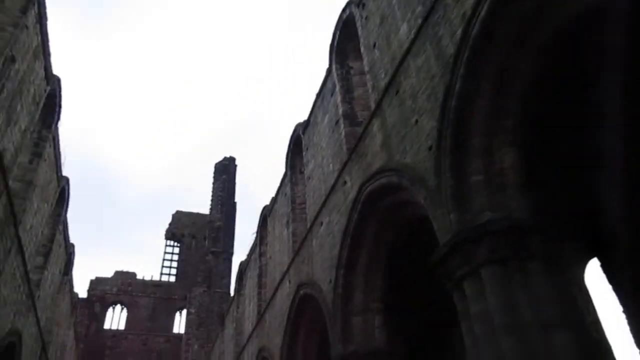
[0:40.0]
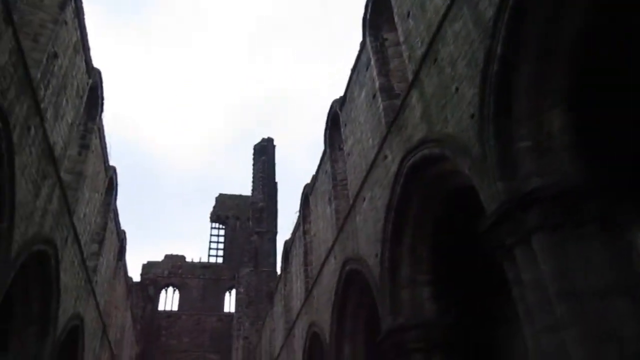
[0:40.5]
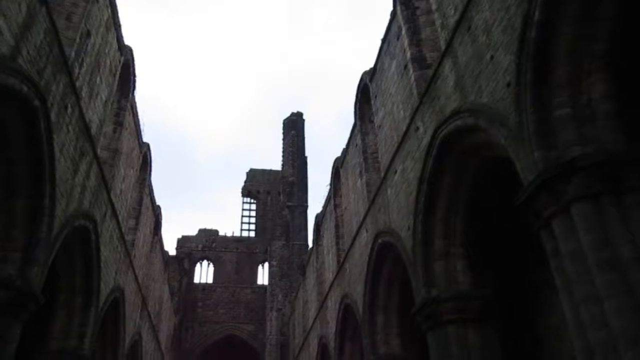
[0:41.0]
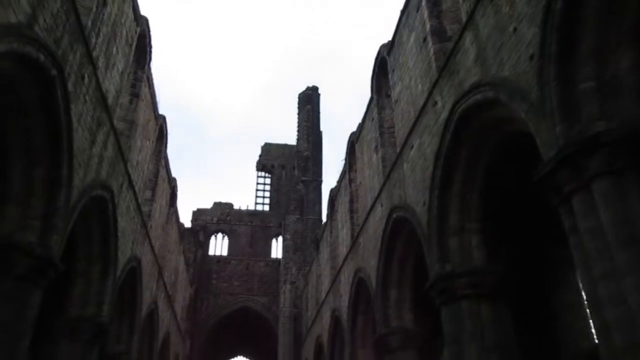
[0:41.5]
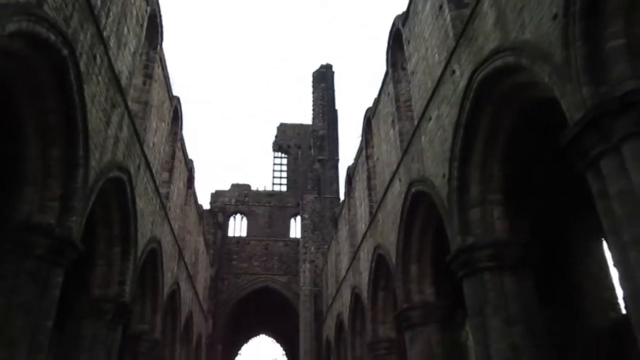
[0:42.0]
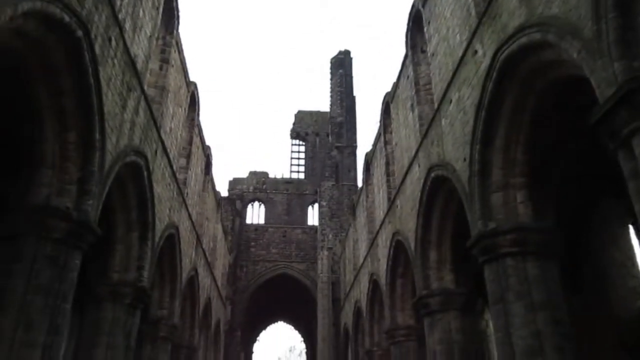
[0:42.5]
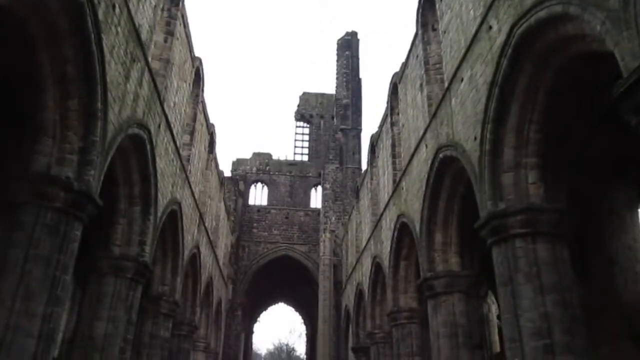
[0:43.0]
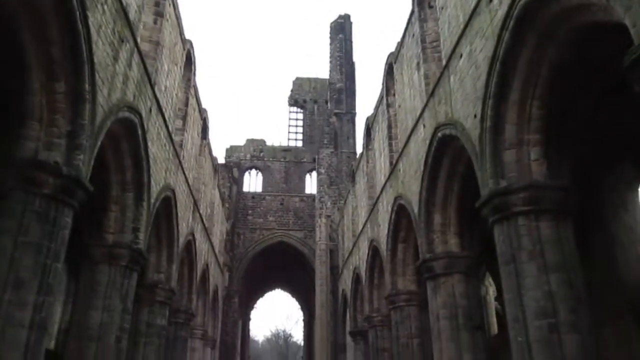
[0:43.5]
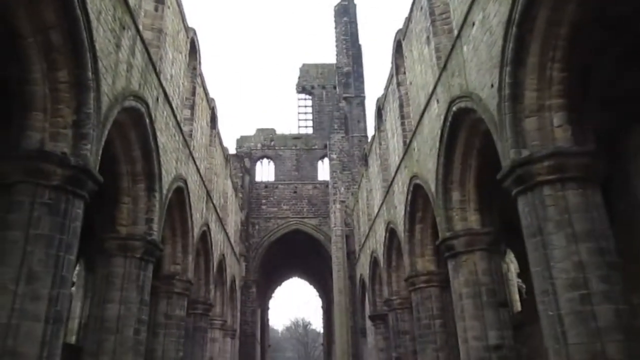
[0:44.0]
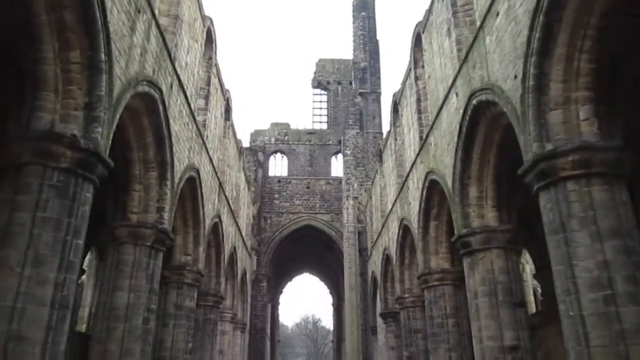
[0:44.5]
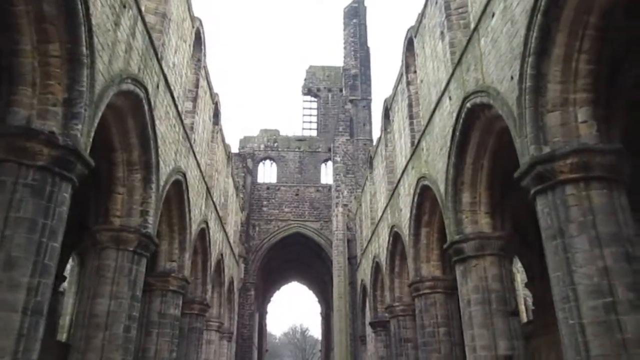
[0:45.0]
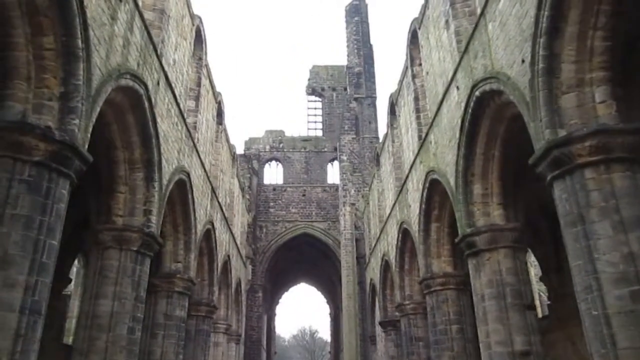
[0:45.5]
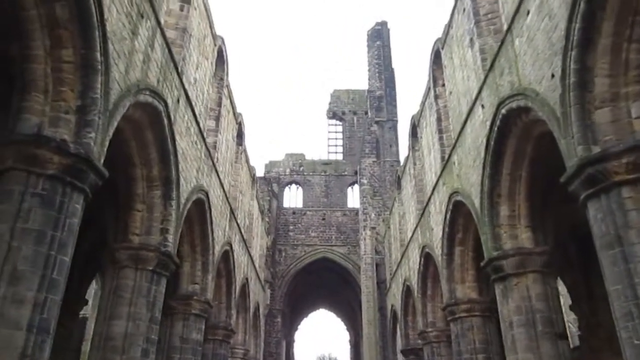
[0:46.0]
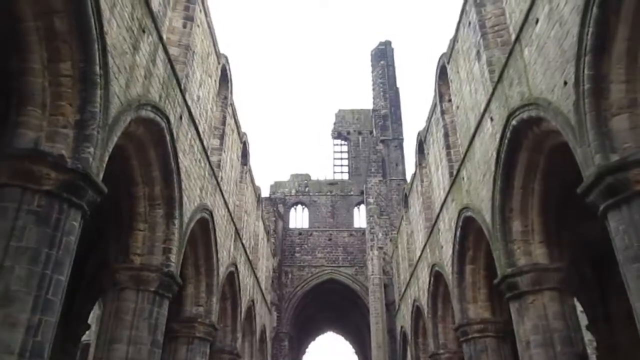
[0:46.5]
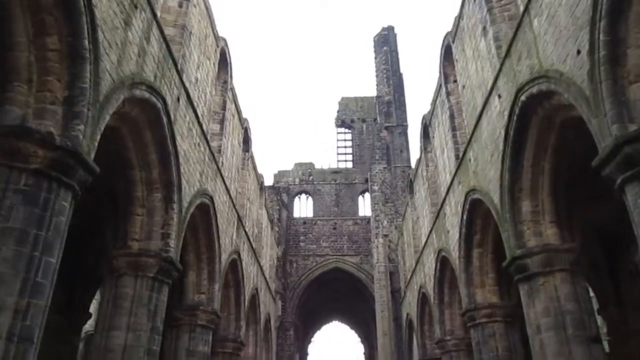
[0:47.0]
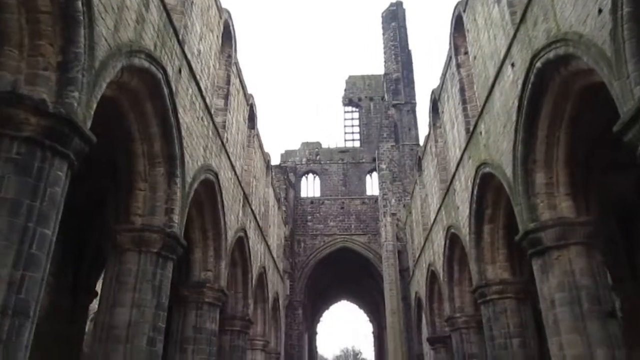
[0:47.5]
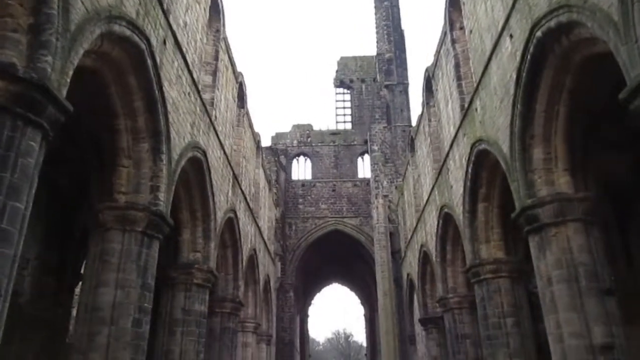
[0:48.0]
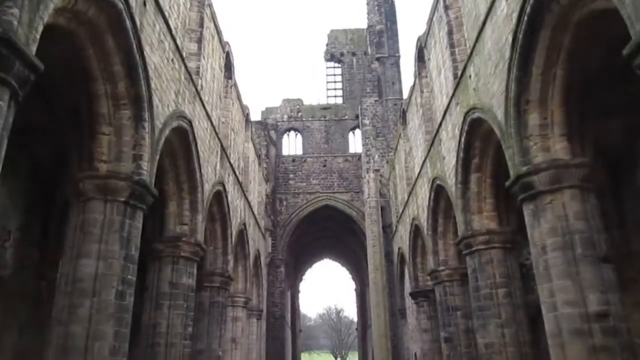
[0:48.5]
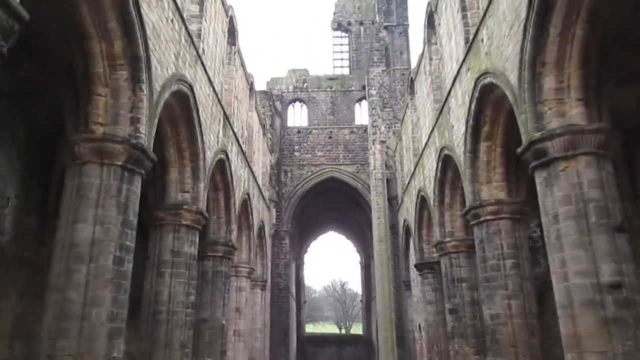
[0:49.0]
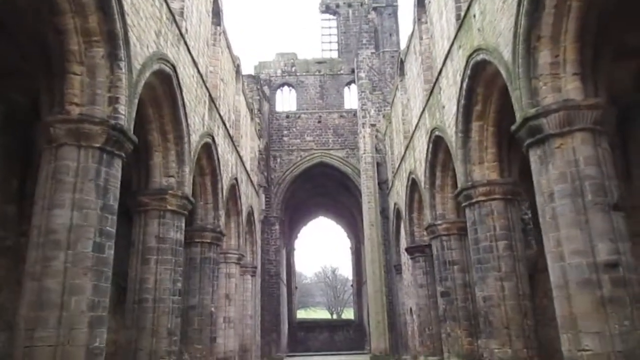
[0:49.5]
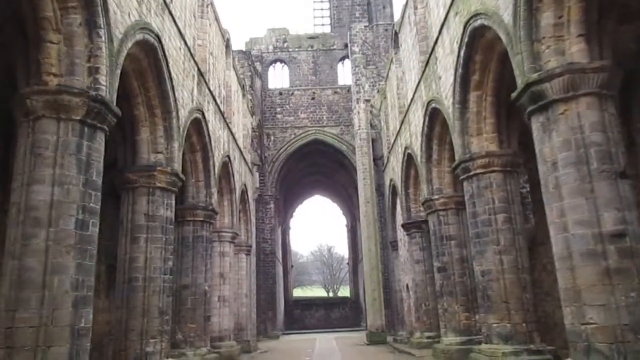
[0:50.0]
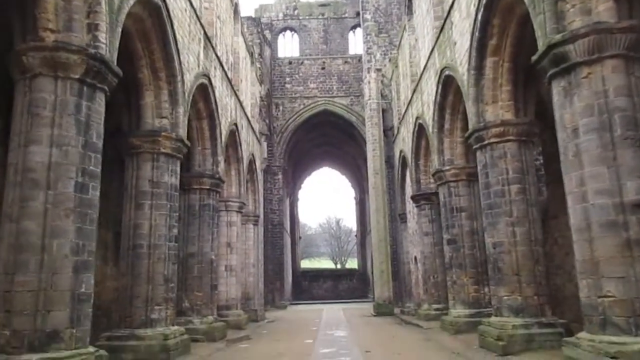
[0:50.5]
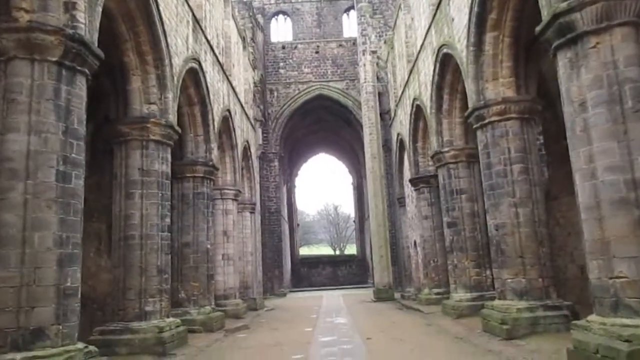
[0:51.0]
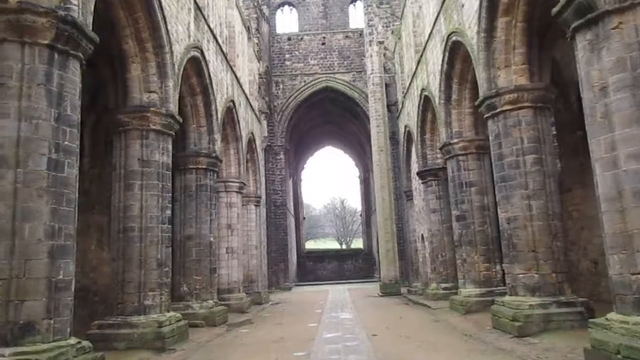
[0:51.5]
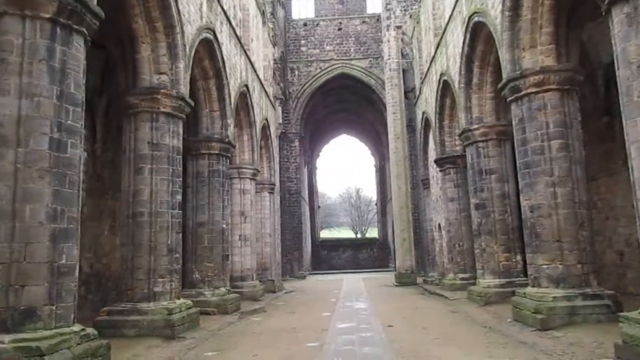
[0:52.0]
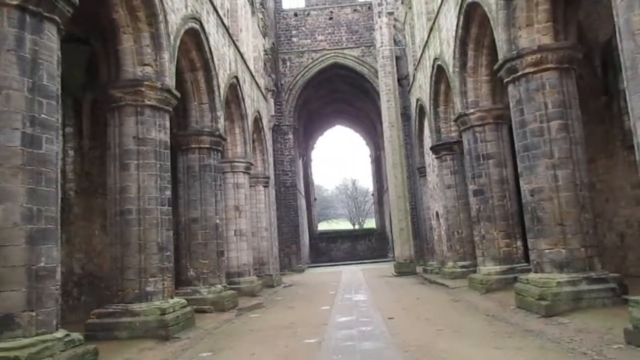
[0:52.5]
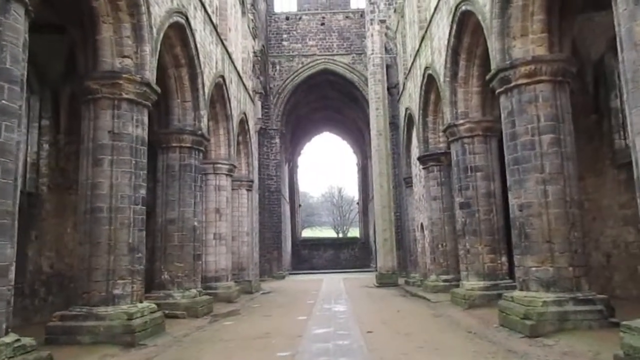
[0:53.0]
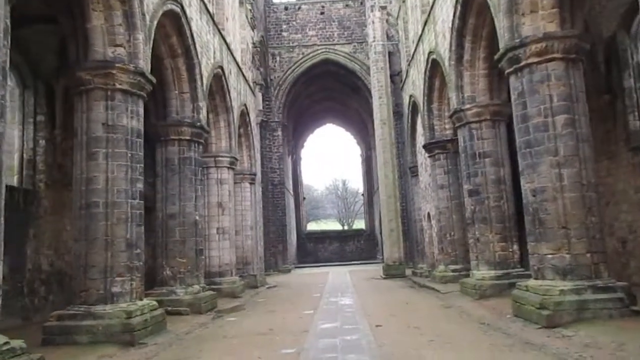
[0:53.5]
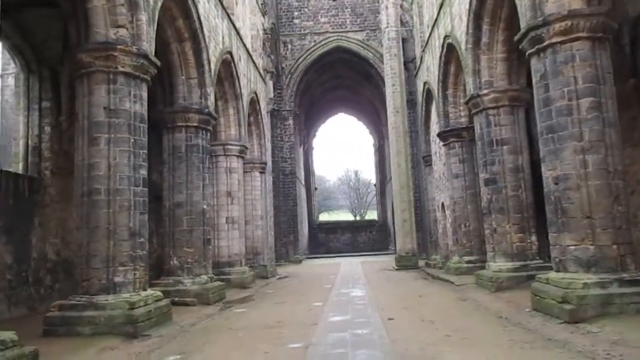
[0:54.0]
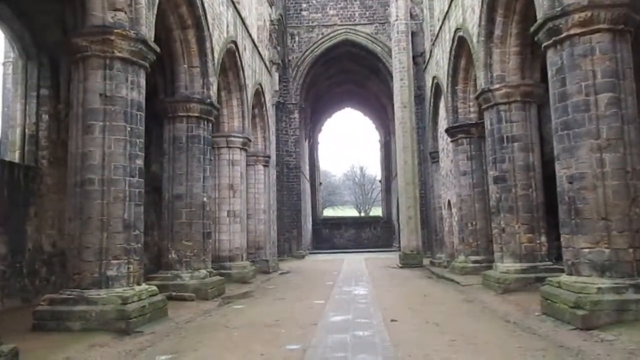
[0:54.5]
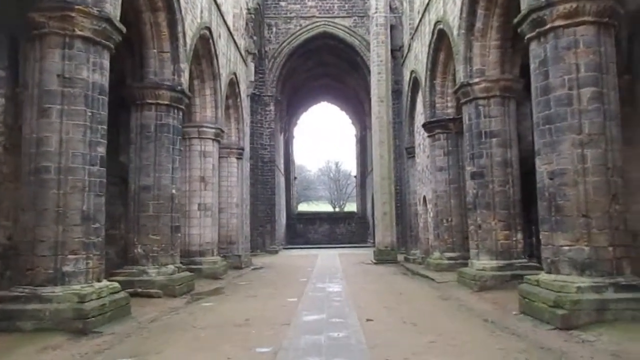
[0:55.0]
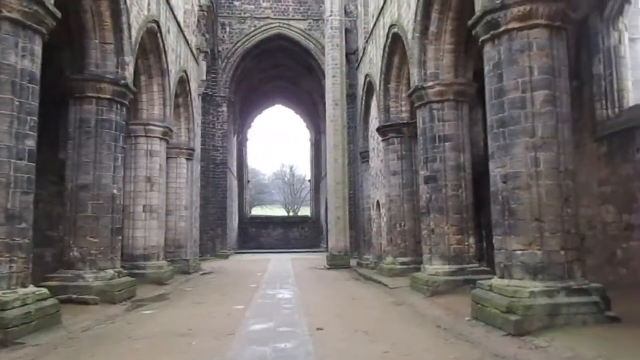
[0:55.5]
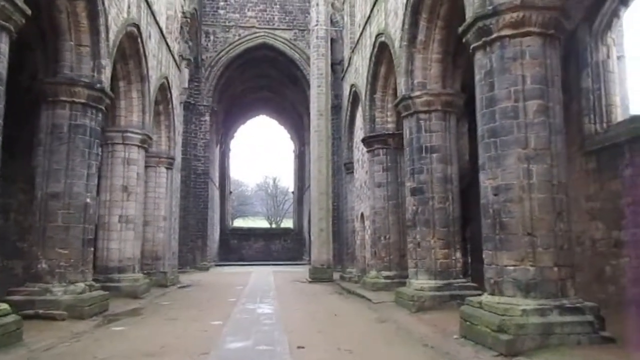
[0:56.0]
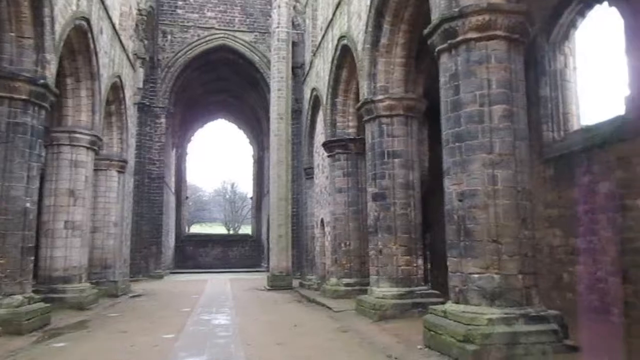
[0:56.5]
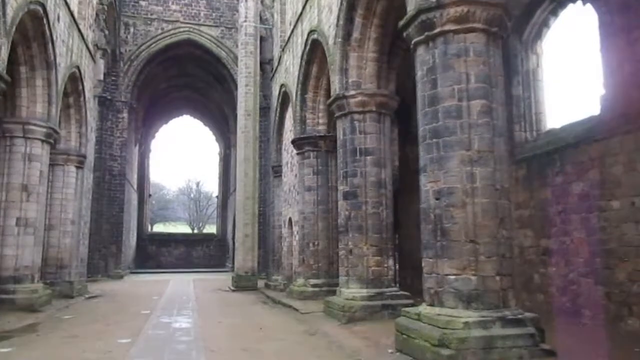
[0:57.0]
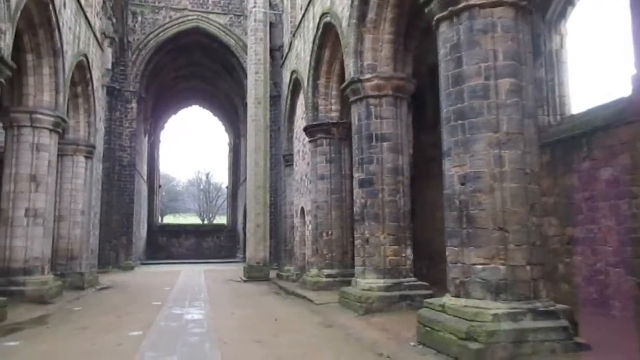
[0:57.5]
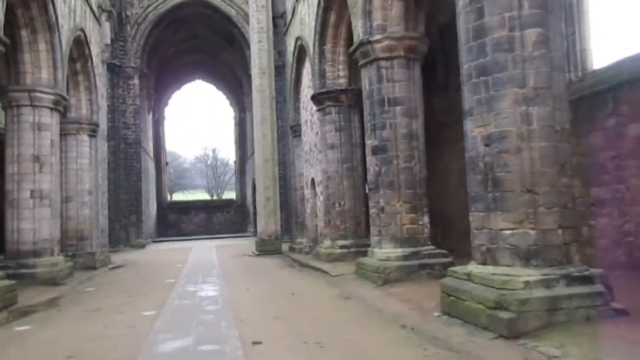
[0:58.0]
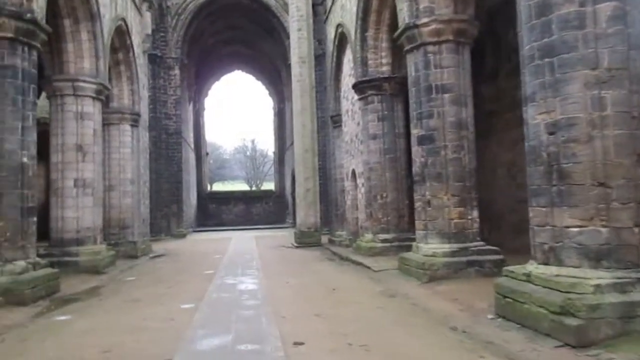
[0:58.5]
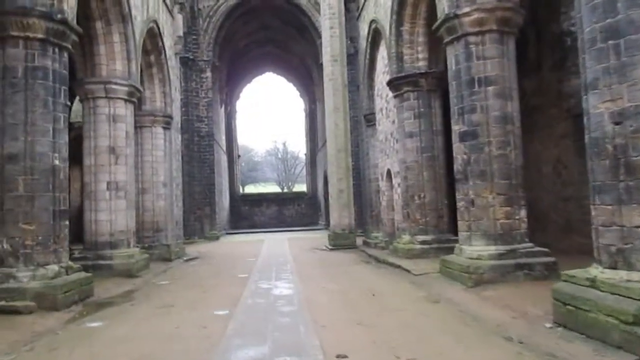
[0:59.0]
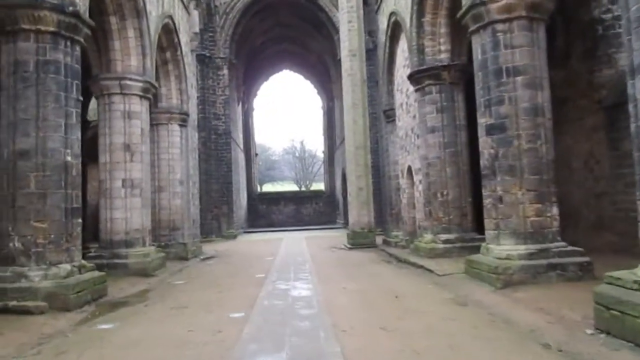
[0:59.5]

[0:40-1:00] The camera pans to the left and shows the structure on top of the gate. A tall spire leads upward on the right side. There is part of an arched window above the two windows, but the left side of the structure has broken away. The person begins walking forward toward the gate while continuing to point the camera upward. Light streams in through the gate and through the windows above. To the right of the gray path, in the brown section of stone, there appears to be a single large pillar just in front of the gatehouse, which is not symmetrical with the other side; it sits out to the left of the pillar supporting the archways in the right structure. The person keeps walking forward as the camera wobbles gently back and forth.